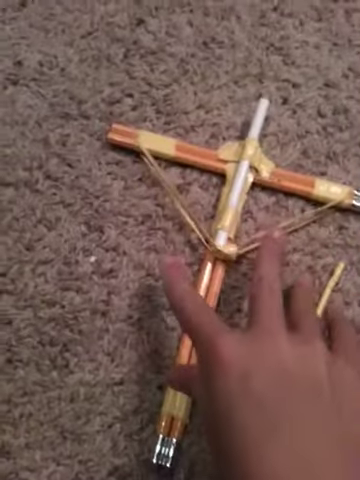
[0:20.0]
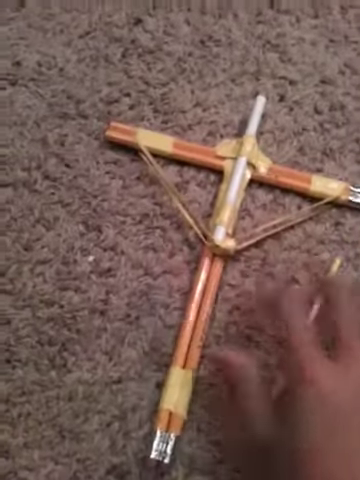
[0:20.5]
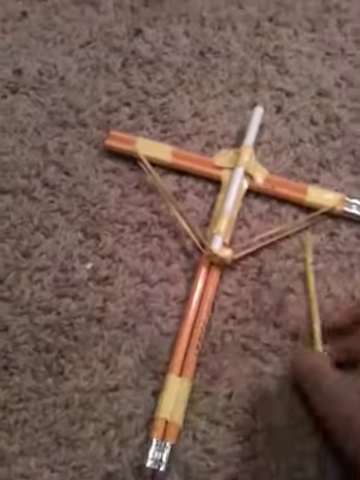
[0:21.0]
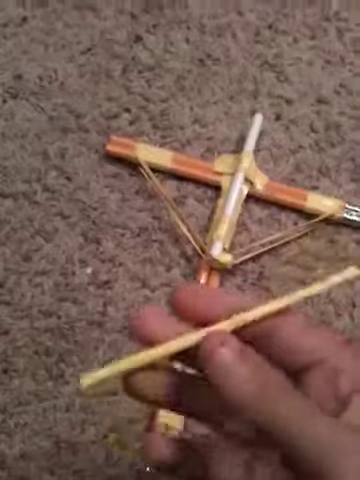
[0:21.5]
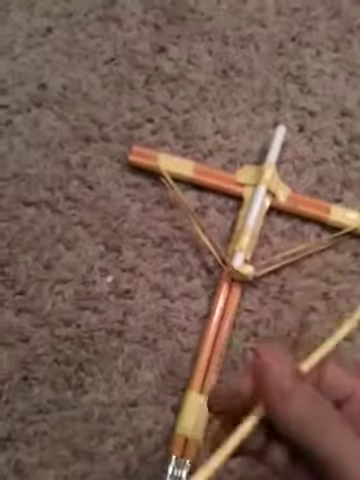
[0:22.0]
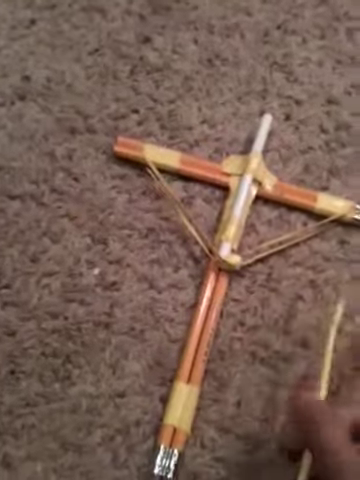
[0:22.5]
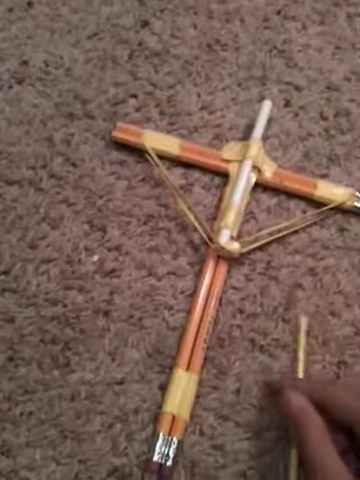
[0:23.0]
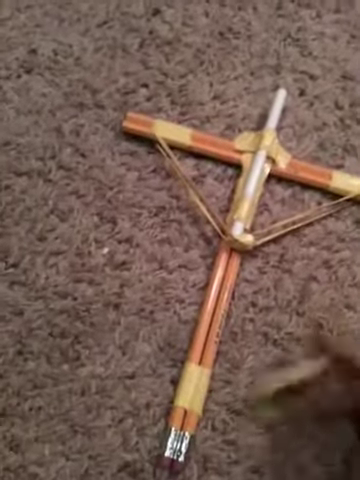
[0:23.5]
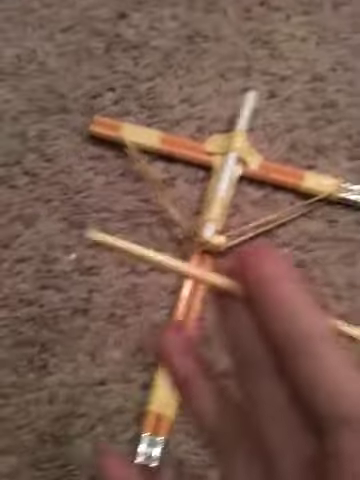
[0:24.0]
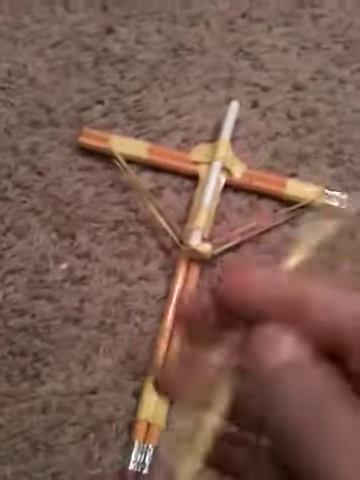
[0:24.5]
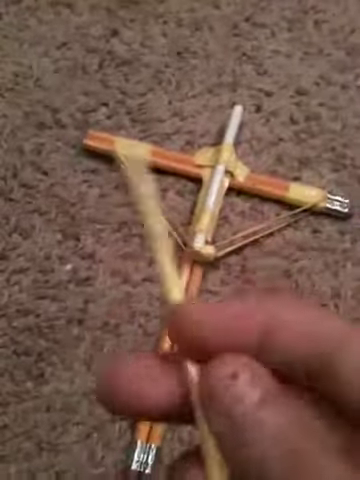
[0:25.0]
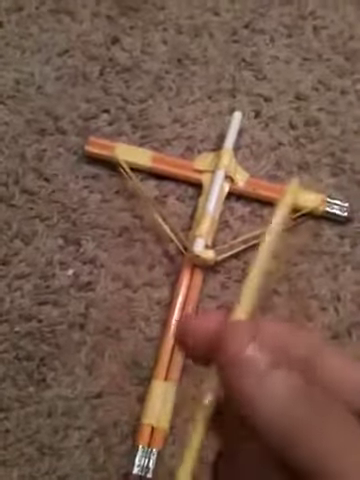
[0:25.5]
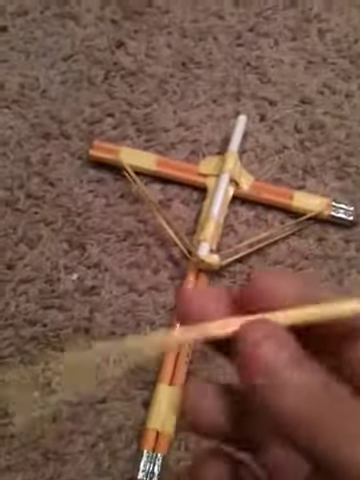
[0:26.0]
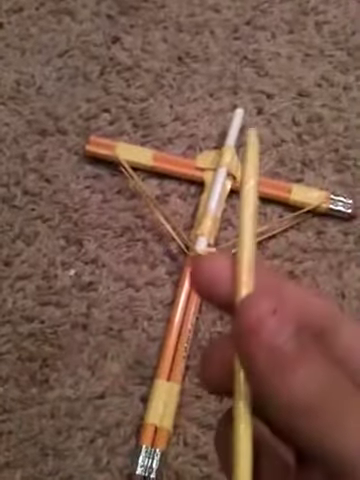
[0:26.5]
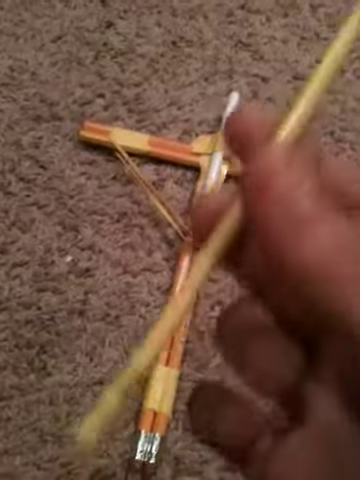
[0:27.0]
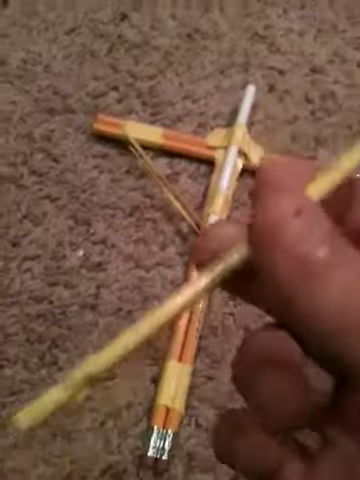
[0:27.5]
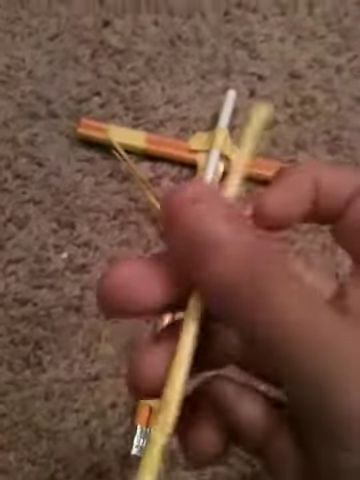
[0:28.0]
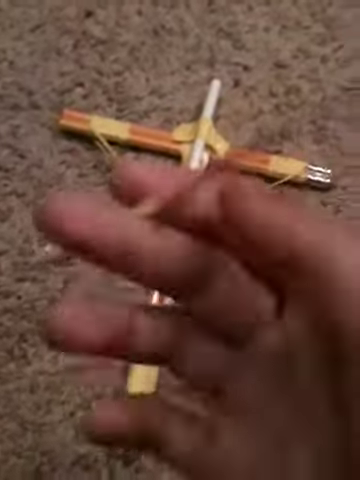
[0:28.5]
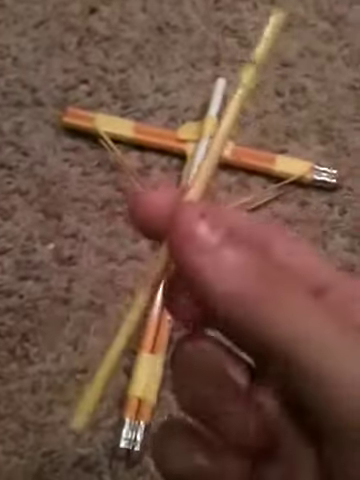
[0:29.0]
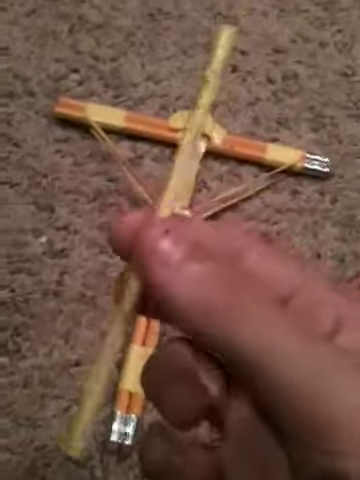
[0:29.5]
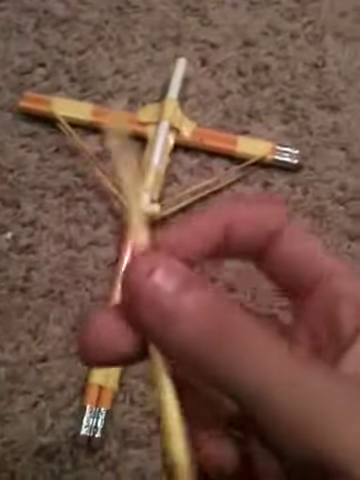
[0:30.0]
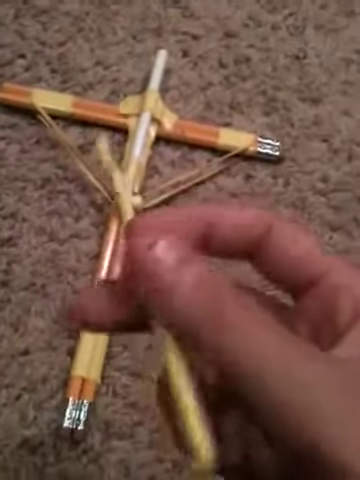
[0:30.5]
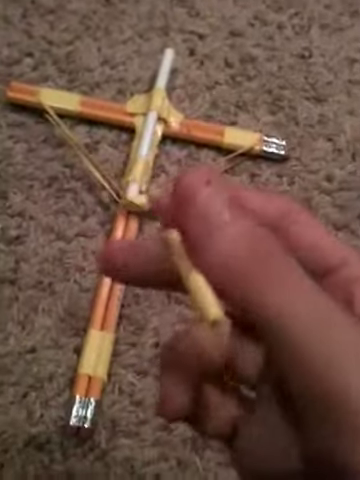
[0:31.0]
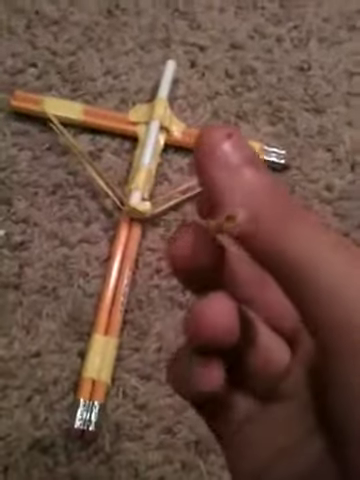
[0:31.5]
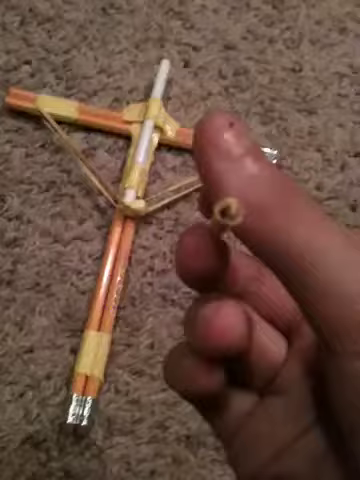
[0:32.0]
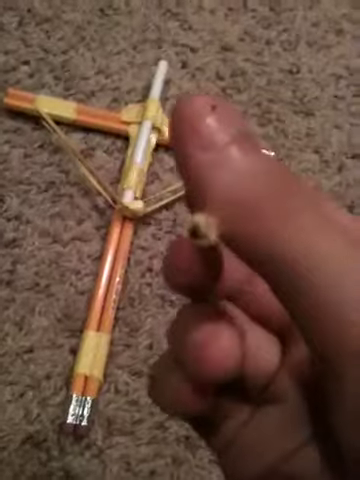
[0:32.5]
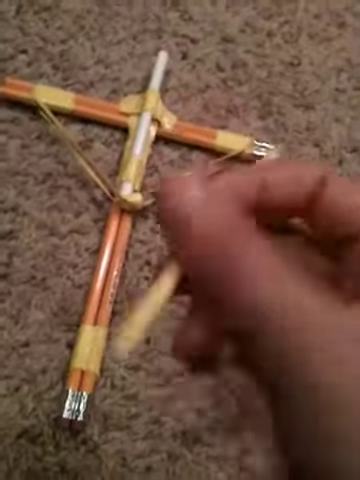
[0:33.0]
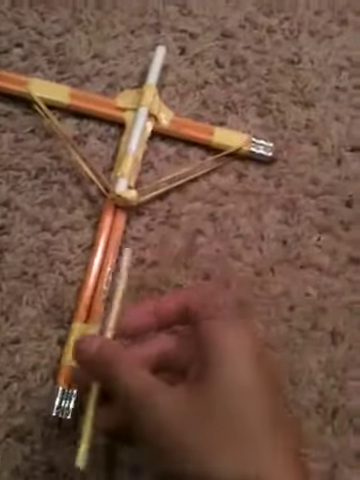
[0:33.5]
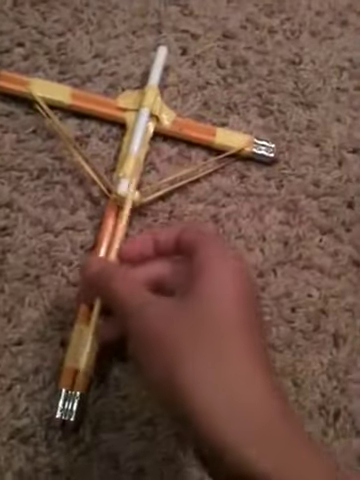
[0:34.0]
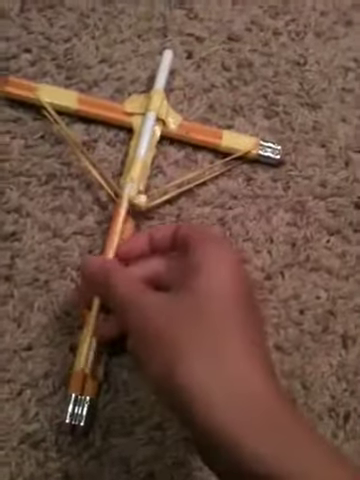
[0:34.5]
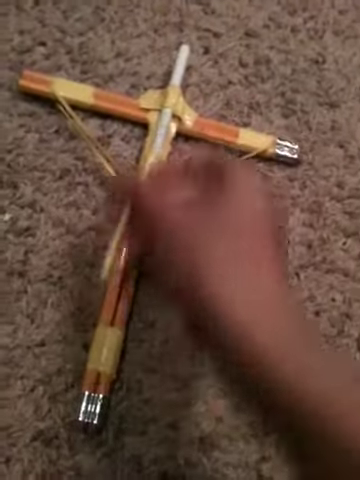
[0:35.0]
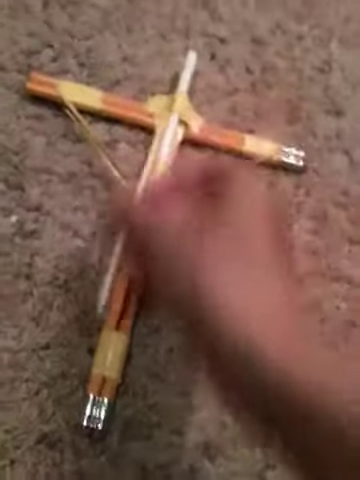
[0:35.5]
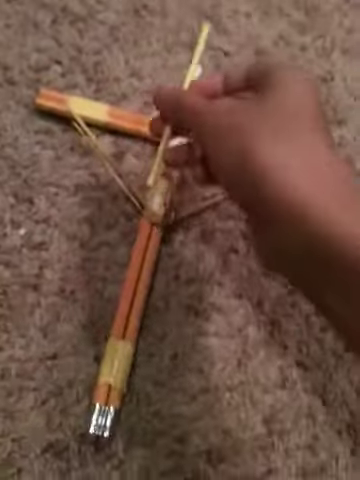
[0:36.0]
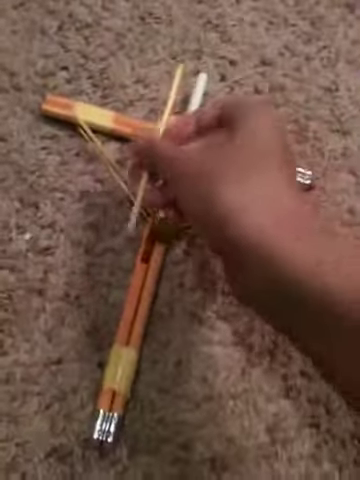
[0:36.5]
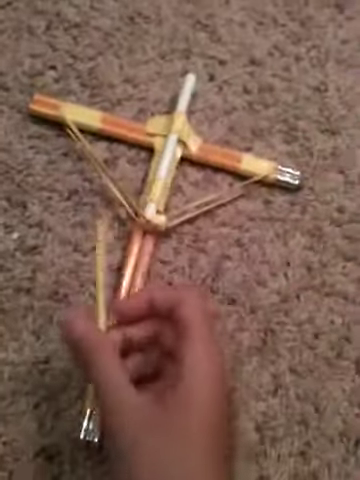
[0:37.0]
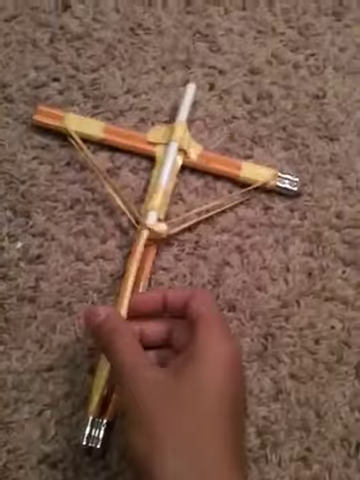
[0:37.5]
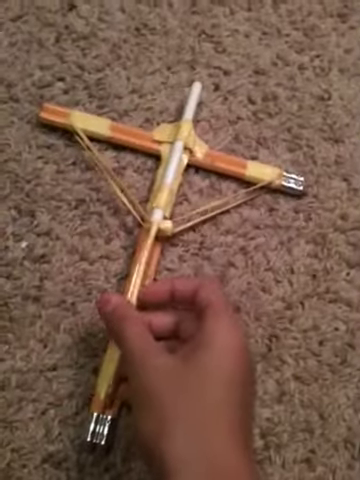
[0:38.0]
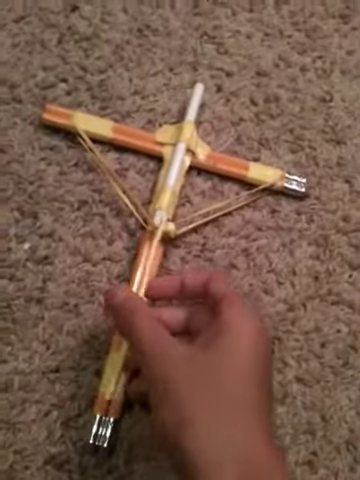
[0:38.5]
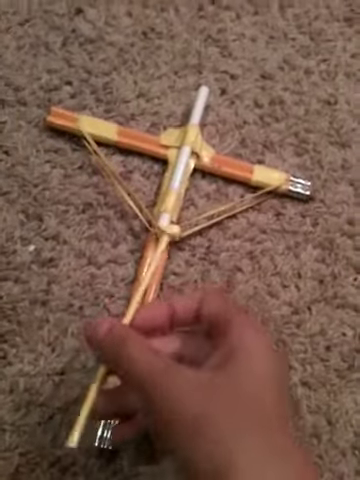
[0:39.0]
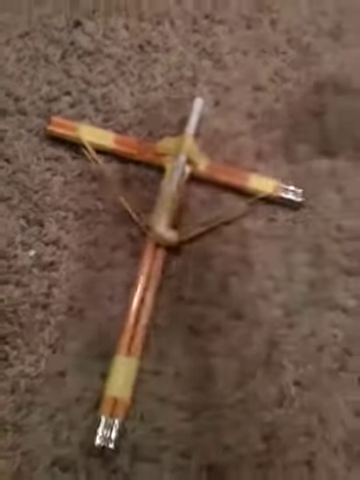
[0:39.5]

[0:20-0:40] The right hand picks up the light brown wooden skewer and twirls it between the index finger, middle finger and thumb while holding it close to the camera. The skewer is spun around, giving a close-up of its rear end. The hand then places it over the pencil device and mimics loading what appears to be a makeshift crossbow made of pencils, setting the skewer on top of the device to show the pathway the skewer would take into the contraption and how it can be loaded and released. The hand appears to be Caucasian. The loading port on the pencil crossbow appears to be white. Yellow tape holds the elastic onto the pencil pairs, which are taped together in a pair configuration in the shape of a cross or crossbow-type device. The whole contraption is on the ground, on what appears to be a light brown carpet.